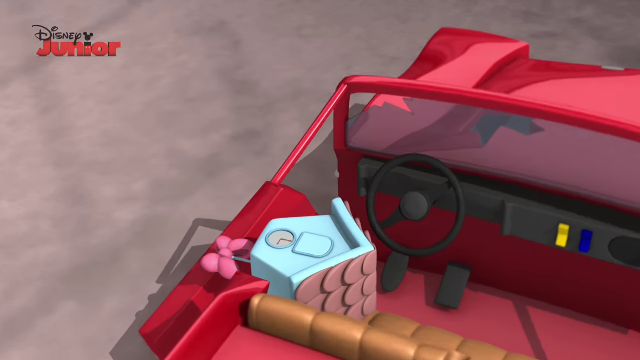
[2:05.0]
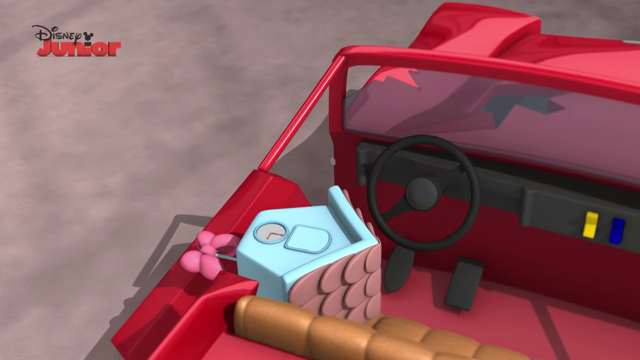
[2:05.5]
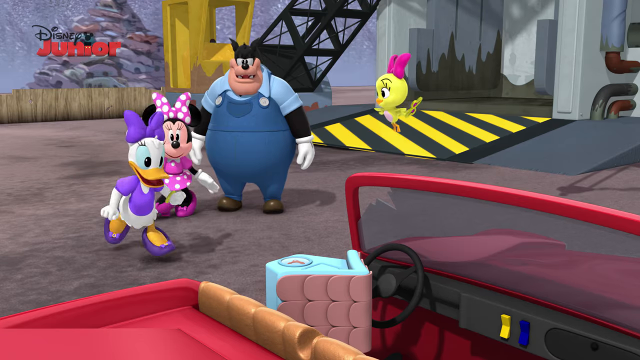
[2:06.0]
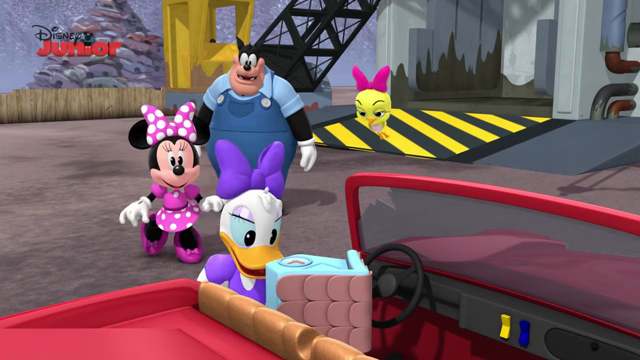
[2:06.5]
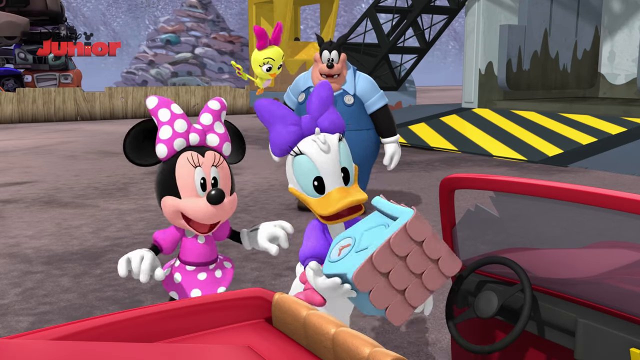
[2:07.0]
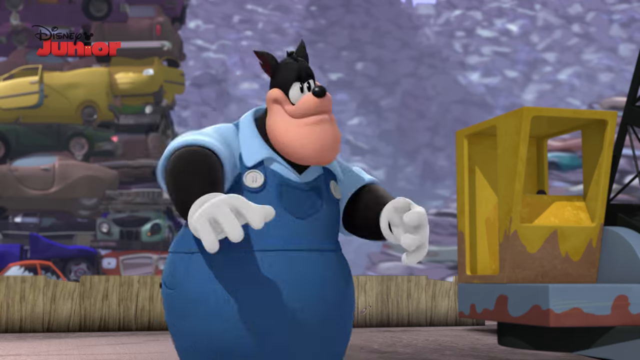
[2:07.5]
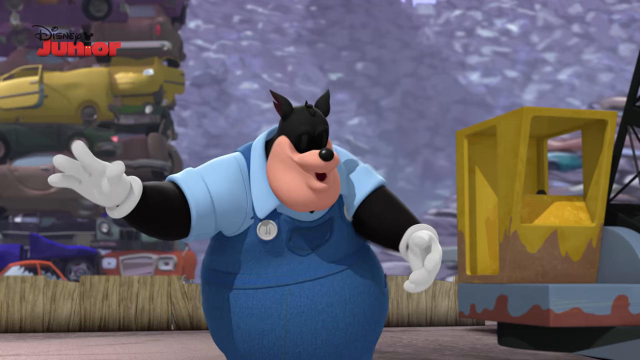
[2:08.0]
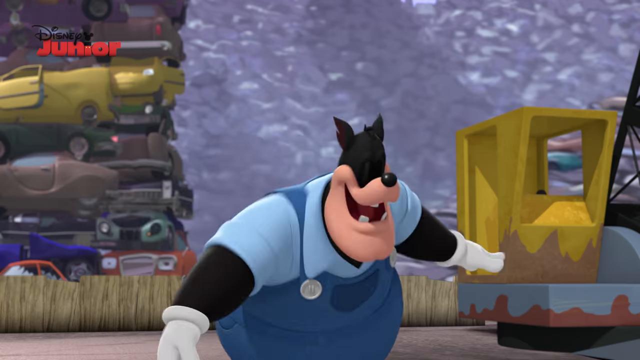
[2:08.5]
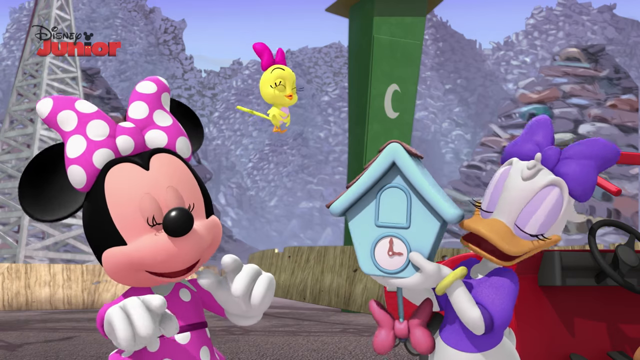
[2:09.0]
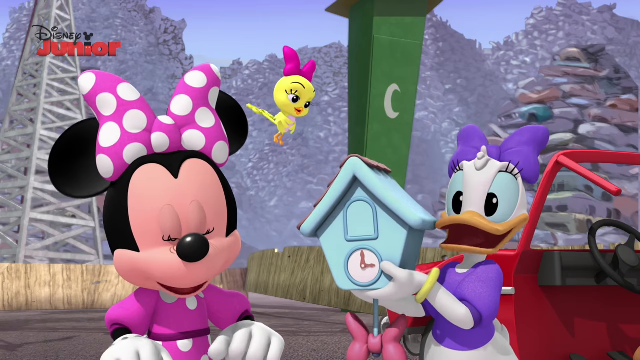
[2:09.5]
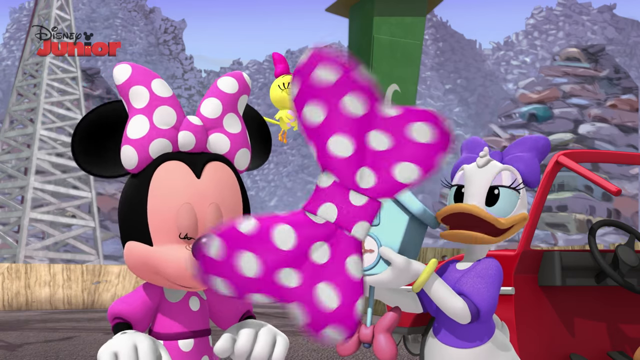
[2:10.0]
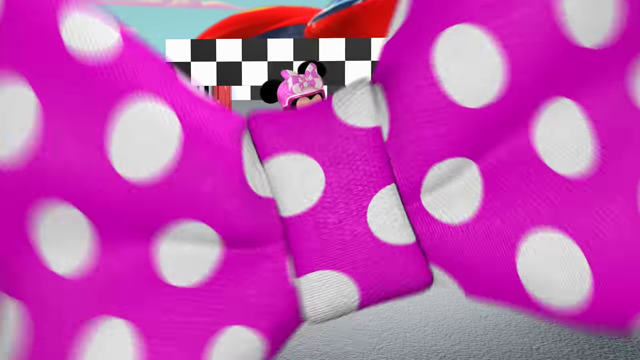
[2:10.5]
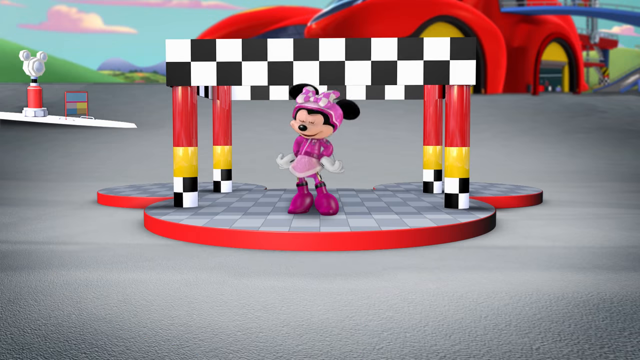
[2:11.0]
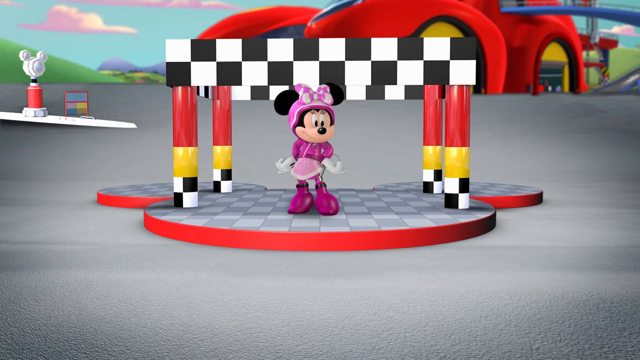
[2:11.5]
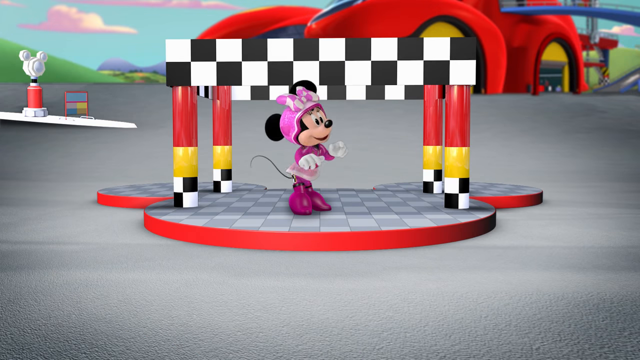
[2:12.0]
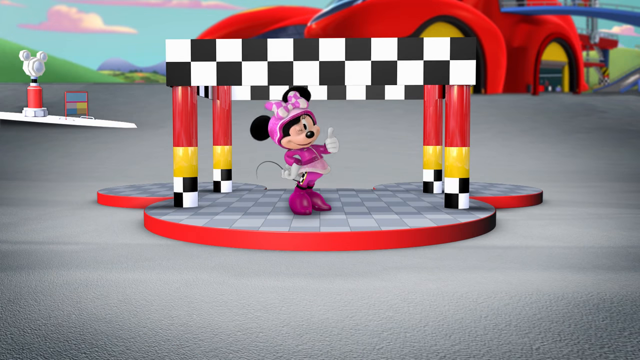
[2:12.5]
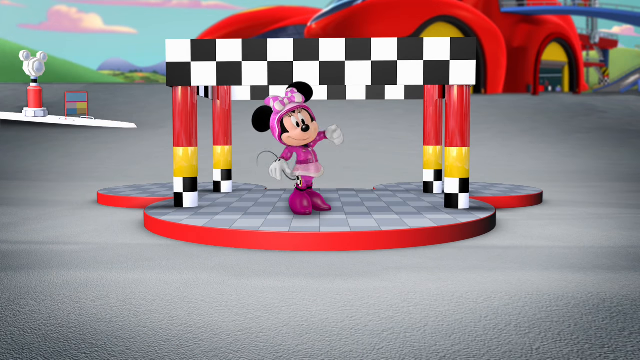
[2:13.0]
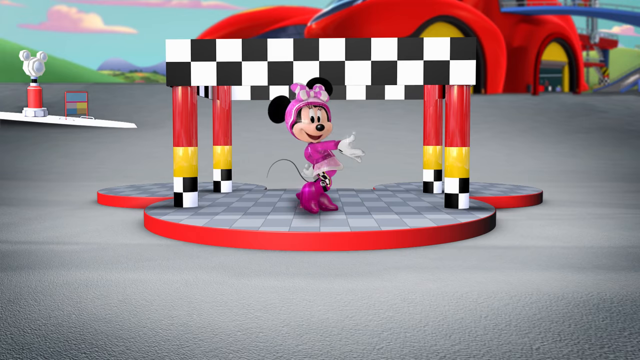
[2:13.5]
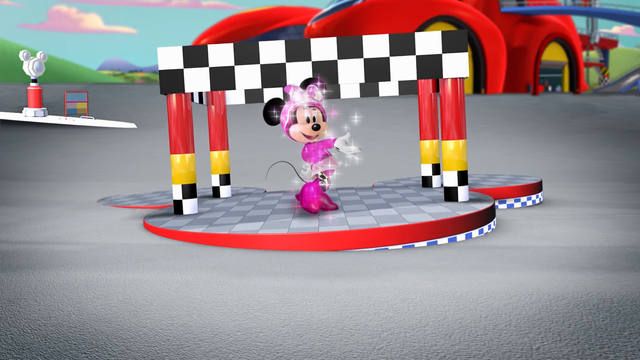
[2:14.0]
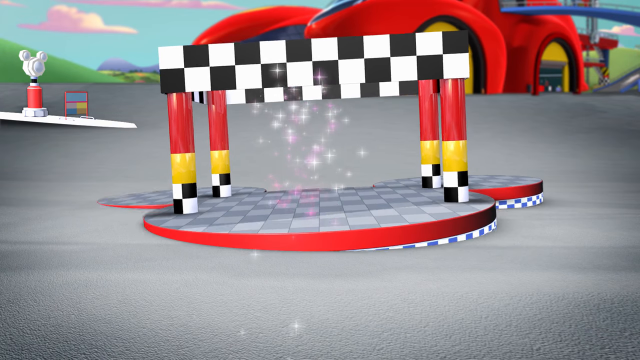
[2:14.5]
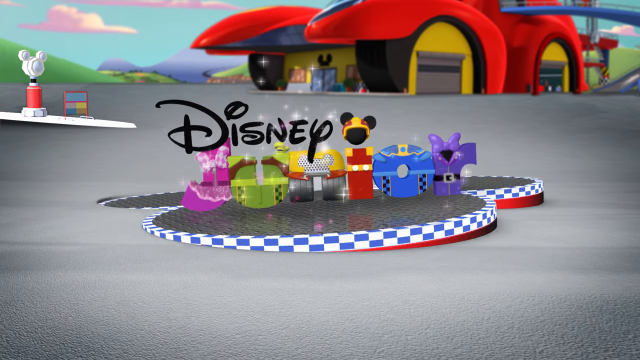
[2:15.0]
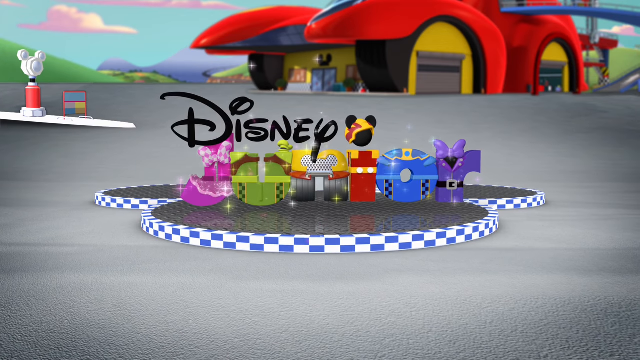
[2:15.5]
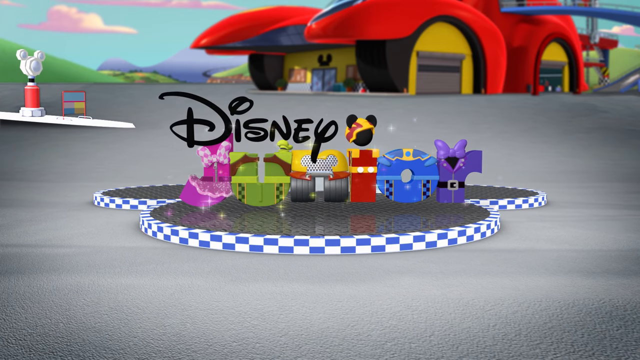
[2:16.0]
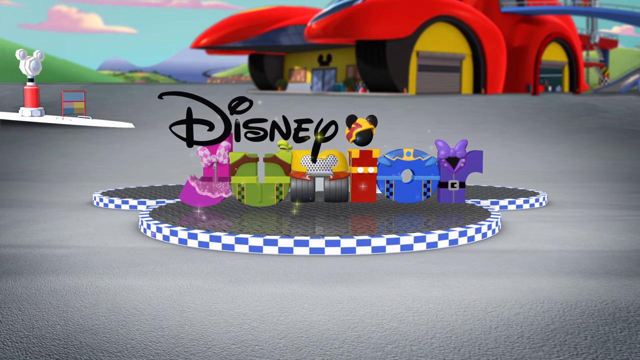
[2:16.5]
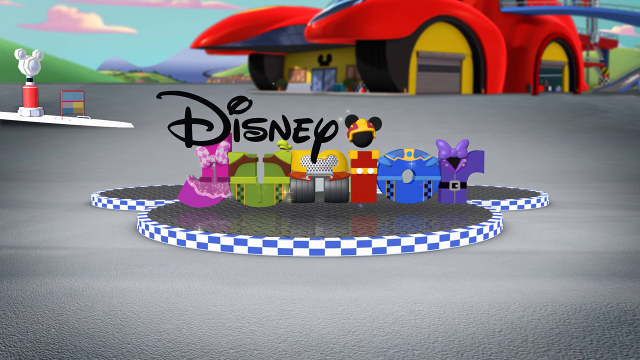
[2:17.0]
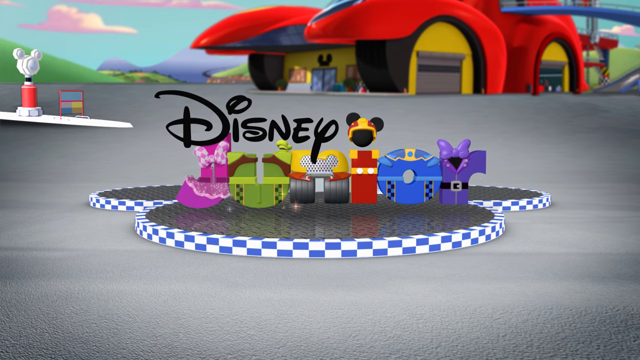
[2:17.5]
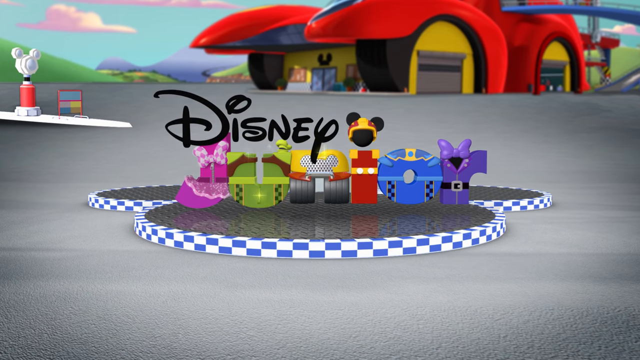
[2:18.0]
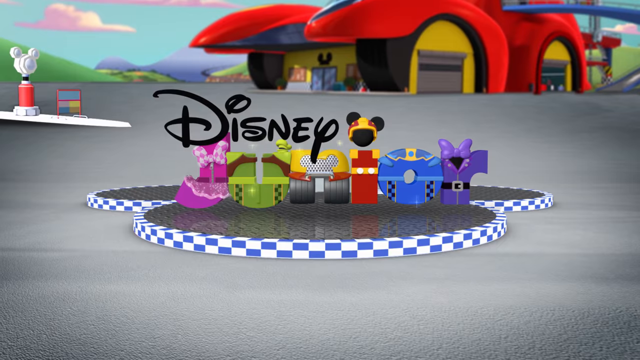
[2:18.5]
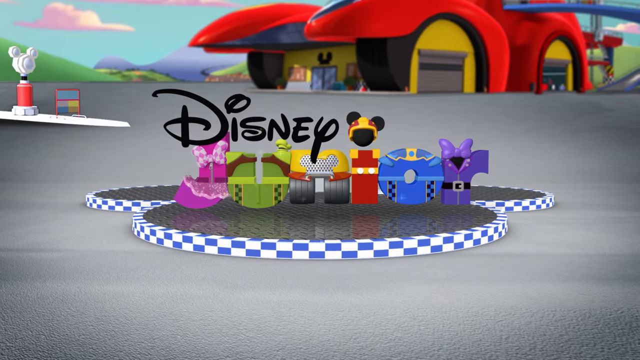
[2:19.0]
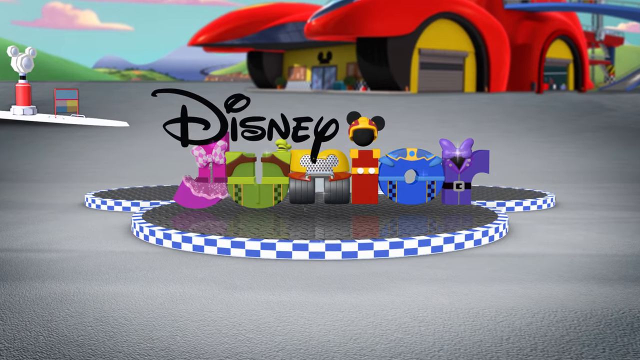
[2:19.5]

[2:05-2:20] The flashback recap continues with a close-up of the blue cuckoo clock on the red seat of the convertible, Daisy running up to grab the cuckoo clock, and Pete spinning in place like a ballerina. The three women then laugh joyously at finding the cuckoo clock: Daisy holds it on the right side of the screen, Minnie is on the left, and the yellow cuckoo bird hovers between them. A final spinning bow transition leads back to the opening sequence: Minnie, in a pink racing outfit with a pink helmet, stands under a black and white checkered racing flag on a flat stage shaped like Mickey's face. The stage rotates 180 degrees to the right, swinging Minnie underneath, though she disappears before the rotation completes. Once it completes, the six little Junior robots rotate into view. The tallest, the red I, looks at all the others as if making sure they all arrived safely. All of them then face the screen, and the Disney Junior logo is visible.